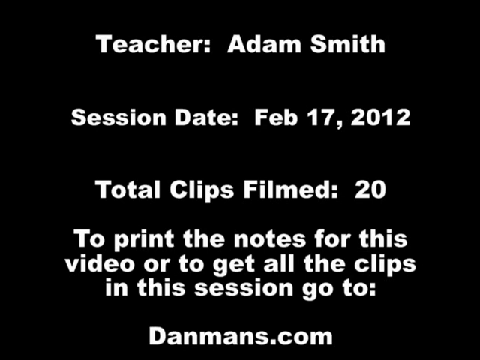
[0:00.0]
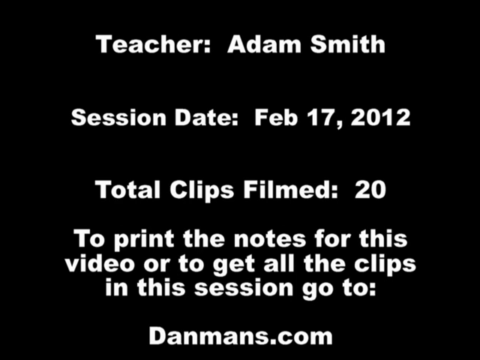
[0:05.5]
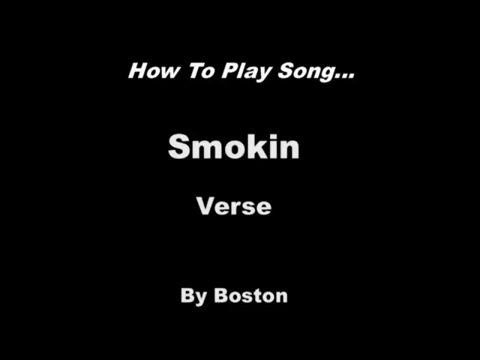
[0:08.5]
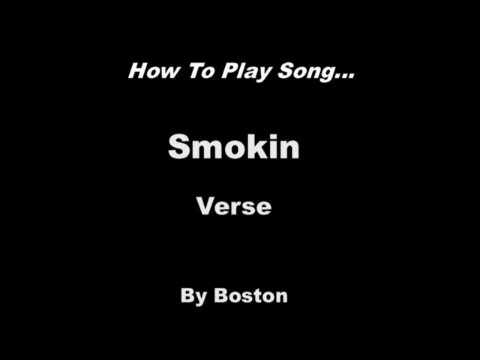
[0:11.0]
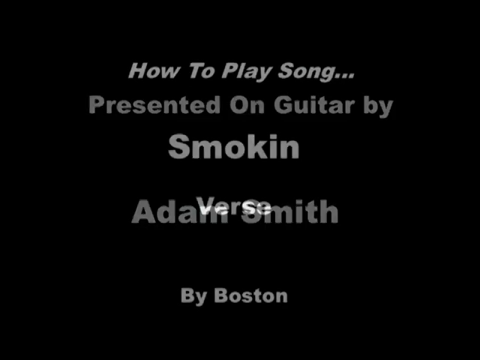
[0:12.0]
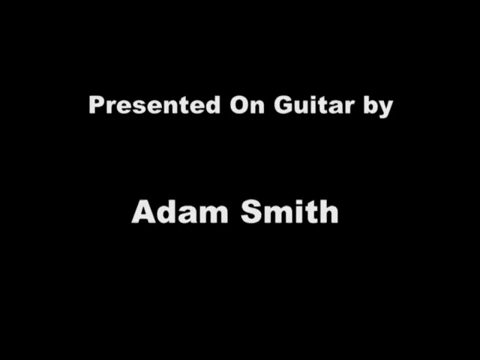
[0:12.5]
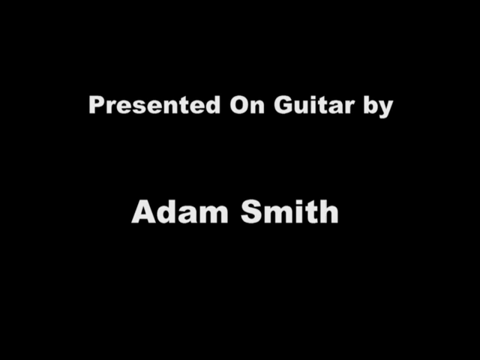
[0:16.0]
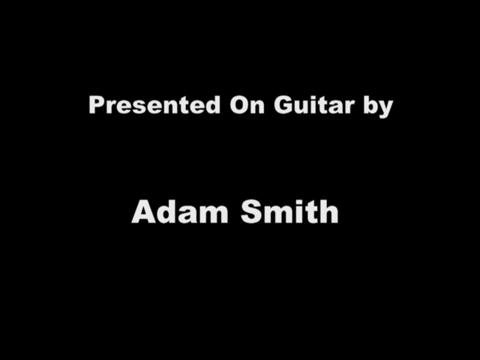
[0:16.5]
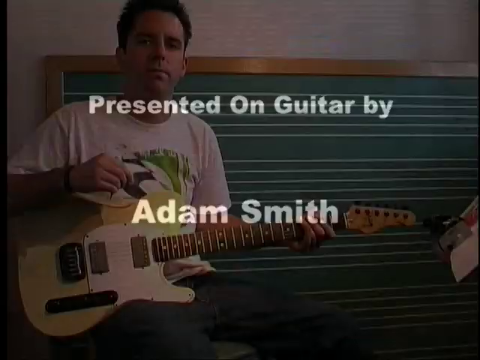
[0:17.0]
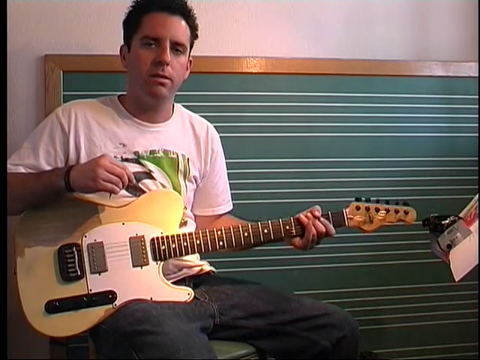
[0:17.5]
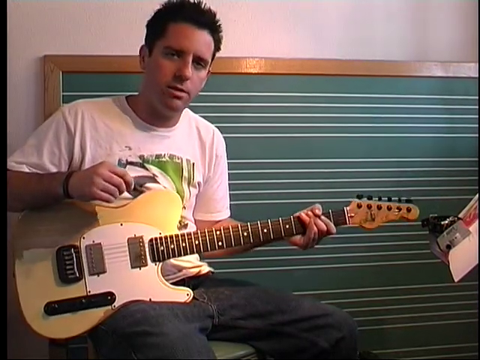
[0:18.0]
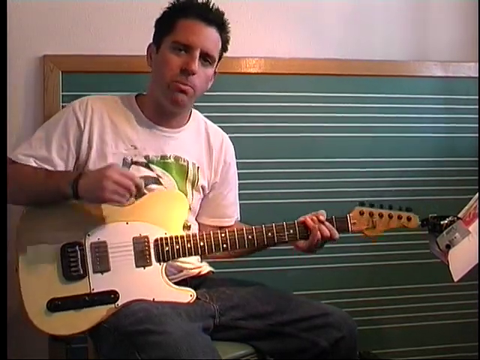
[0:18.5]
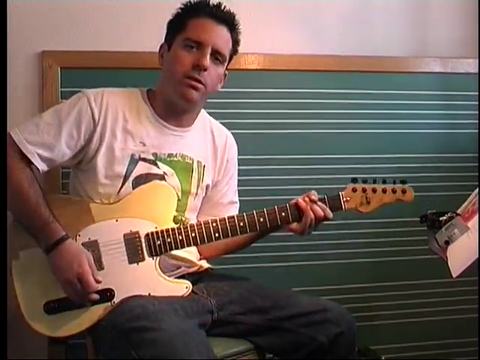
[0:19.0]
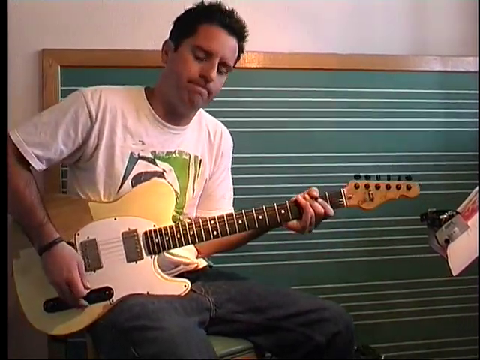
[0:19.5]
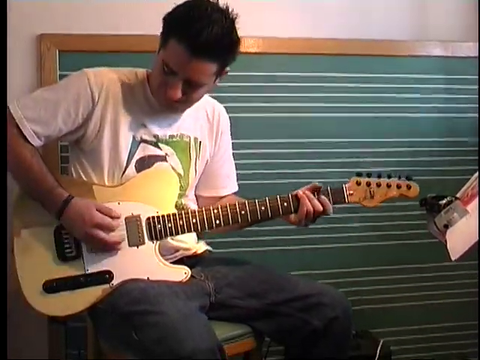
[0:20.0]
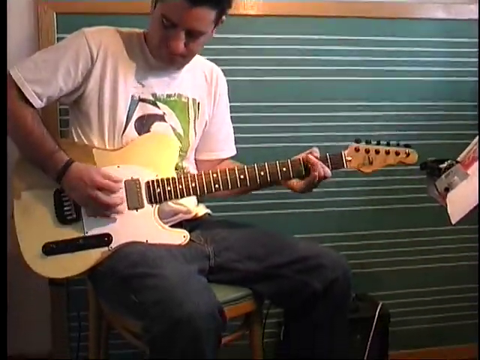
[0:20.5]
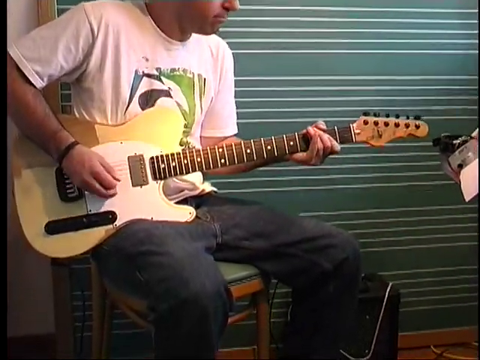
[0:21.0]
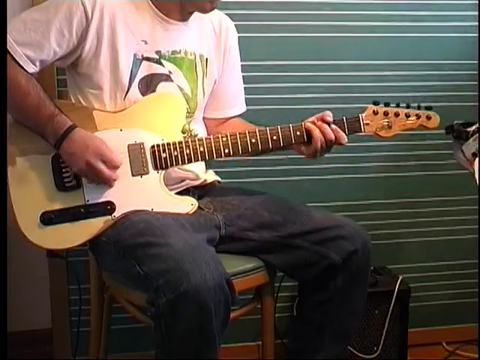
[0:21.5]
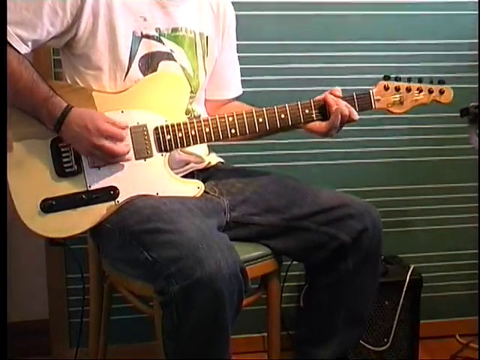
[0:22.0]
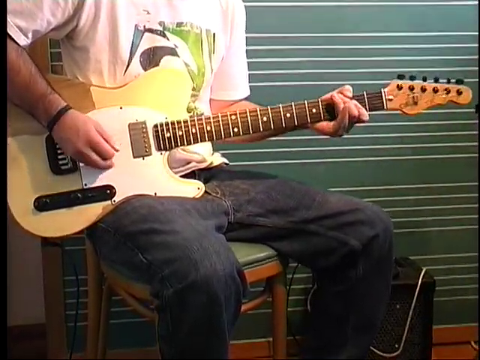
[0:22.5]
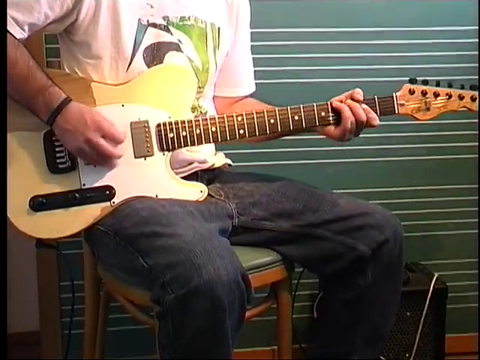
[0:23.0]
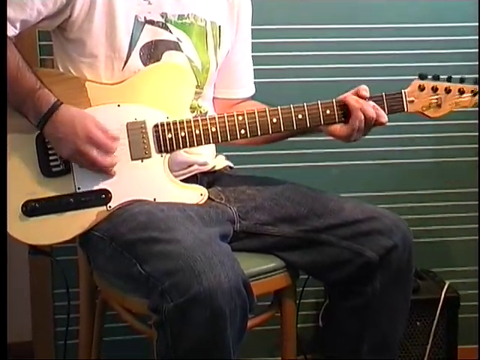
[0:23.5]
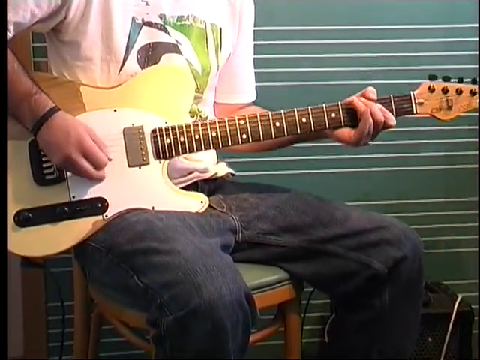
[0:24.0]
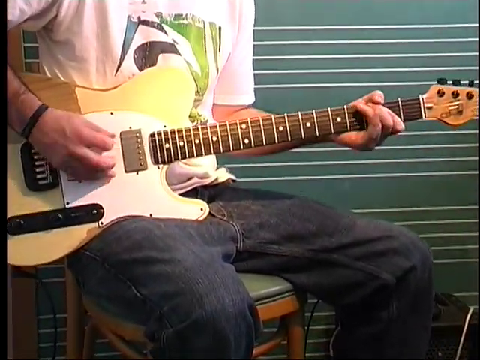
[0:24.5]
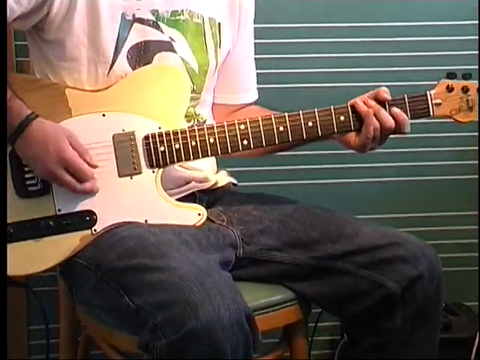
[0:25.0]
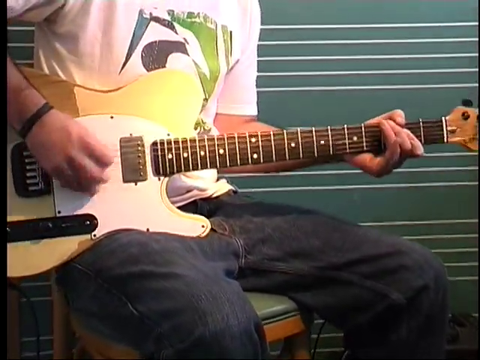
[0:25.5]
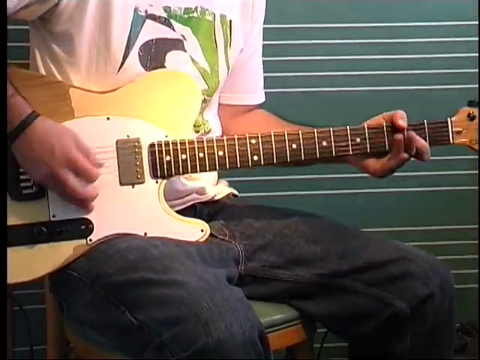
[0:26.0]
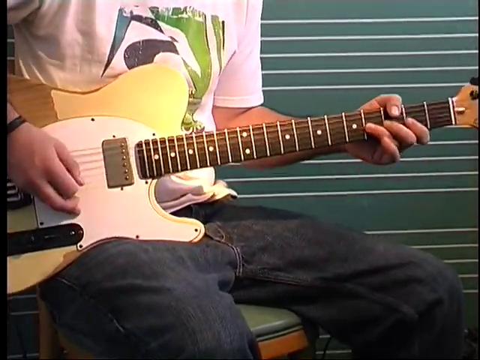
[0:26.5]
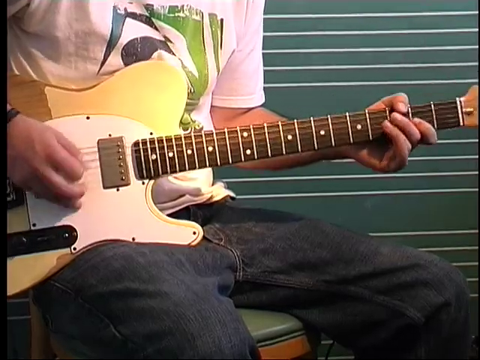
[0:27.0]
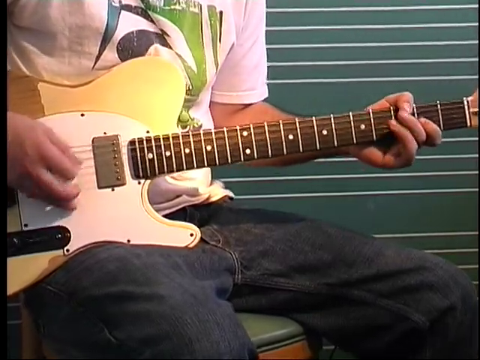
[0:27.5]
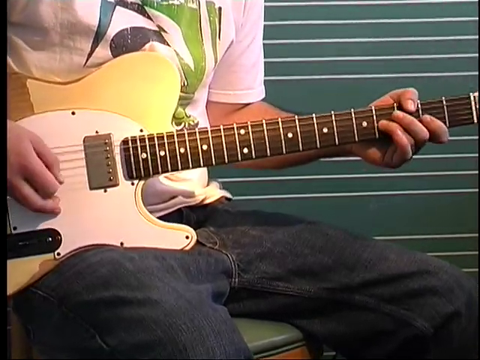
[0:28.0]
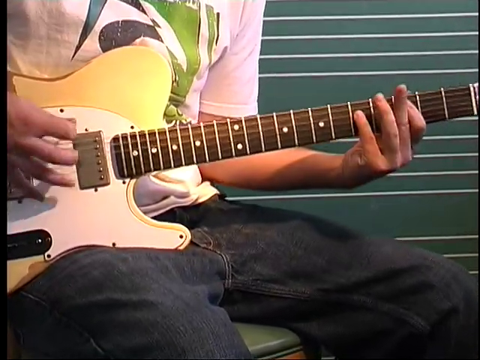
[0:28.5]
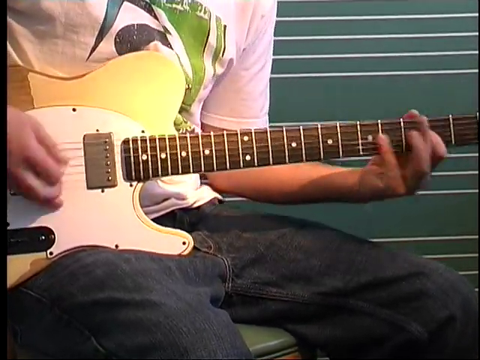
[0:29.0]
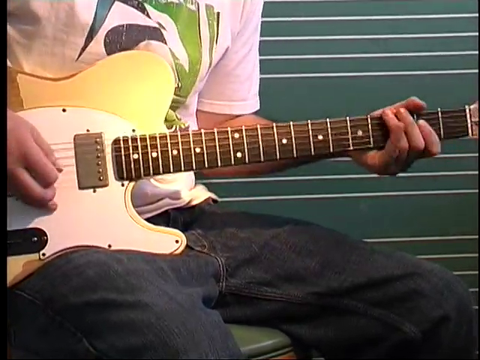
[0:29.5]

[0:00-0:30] The video opens on a black screen with white text at the top reading "Teacher: Adam Smith." Beneath it are the lines "Session Date: Feb 17, 2012," "Total Clips Filmed: 20," and text saying that to print the notes for this video or to get all the clips in this session, go to "danmans.com." The text disappears, leaving a black screen, and then more white text appears reading "How to Play Song, Smokin'," with "Verse" beneath it and "By Boston" at the bottom of the screen. Another black screen follows, reading "presented on guitar by Adam Smith." The scene then changes to a man who looks to be in his late 20s or early 30s, wearing a short-sleeve white shirt with some kind of graphic on the front and blue jeans. He is sitting down with a yellow and white electric guitar in his lap. Behind him is a framed green chalkboard with white lines across it like those on sheet music. The man looks at the camera, says something, and begins playing, looking down somewhat; his right hand strums with a pick while his left hand, at the end of the guitar's neck, presses different strings. The camera zooms in a little closer to the guitar as he continues to play.